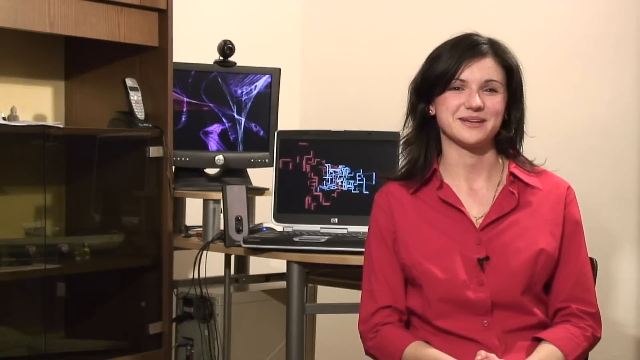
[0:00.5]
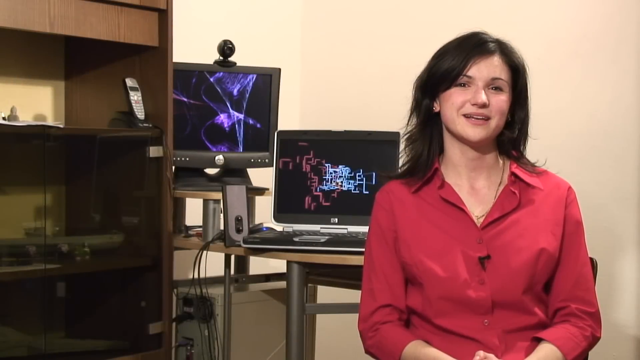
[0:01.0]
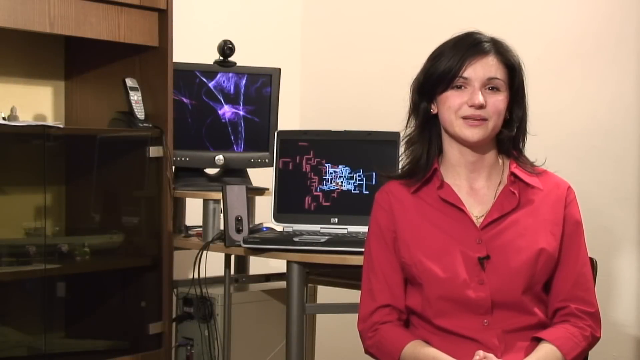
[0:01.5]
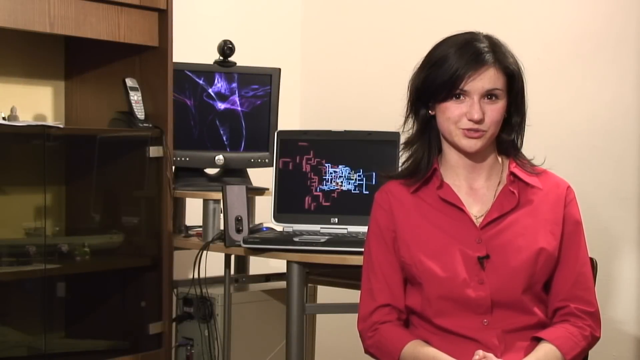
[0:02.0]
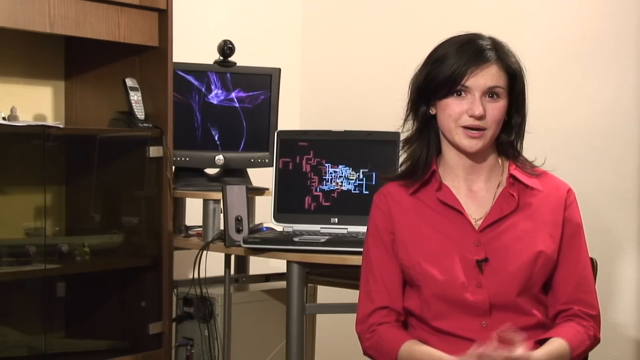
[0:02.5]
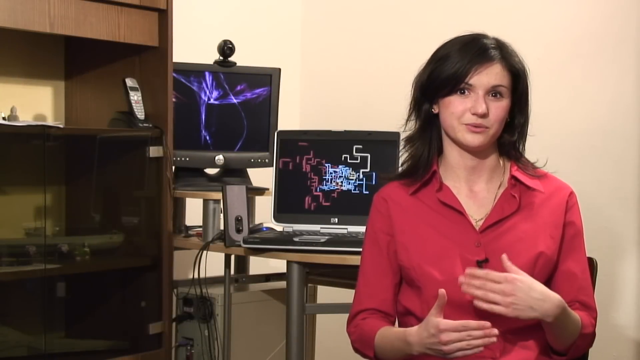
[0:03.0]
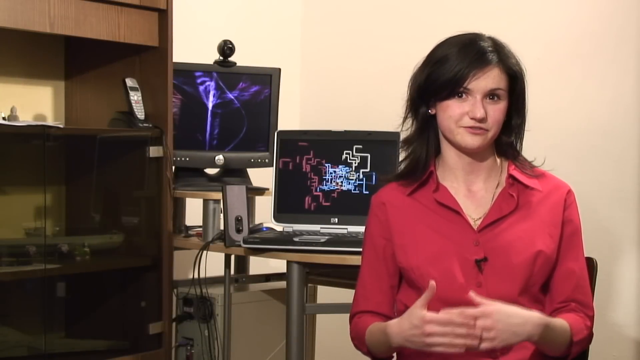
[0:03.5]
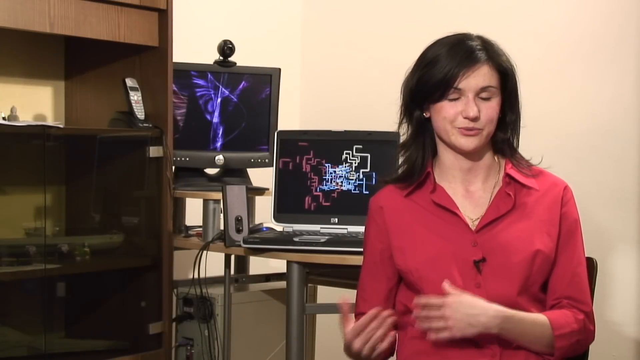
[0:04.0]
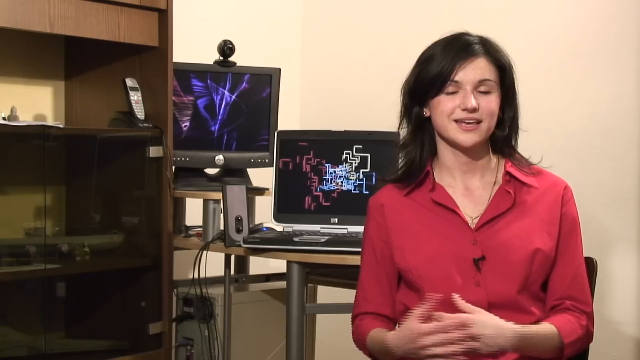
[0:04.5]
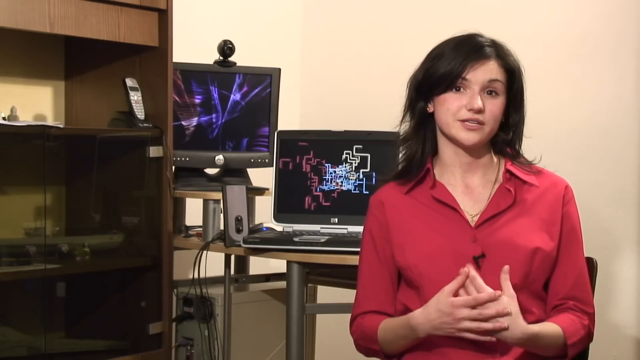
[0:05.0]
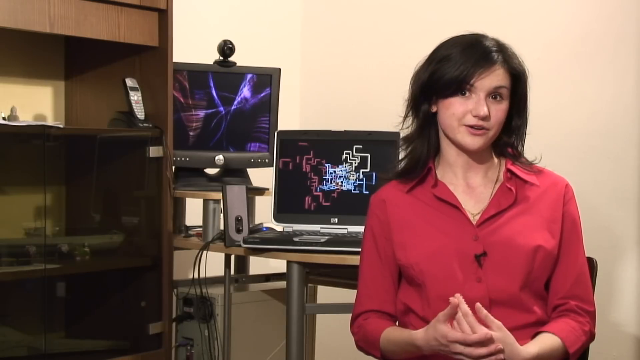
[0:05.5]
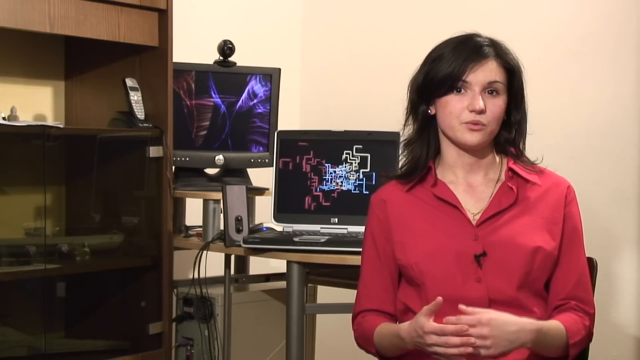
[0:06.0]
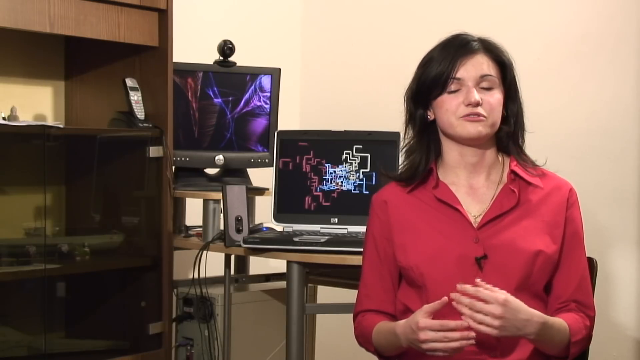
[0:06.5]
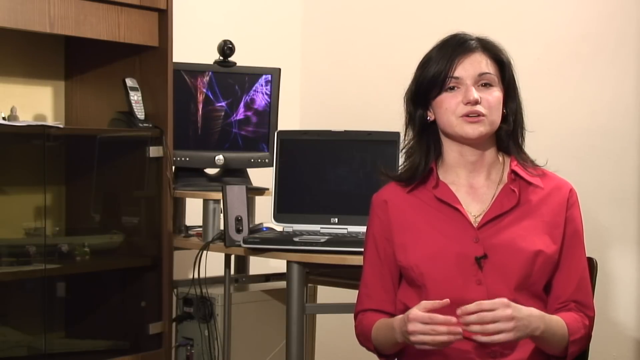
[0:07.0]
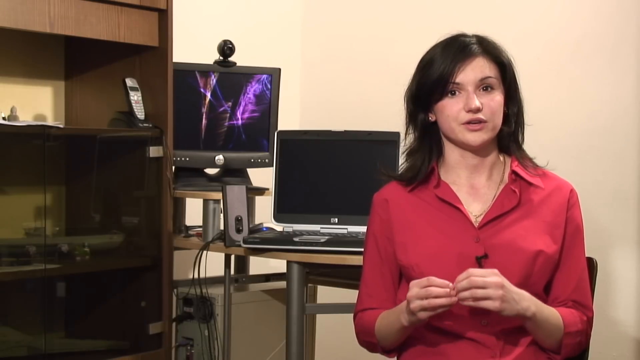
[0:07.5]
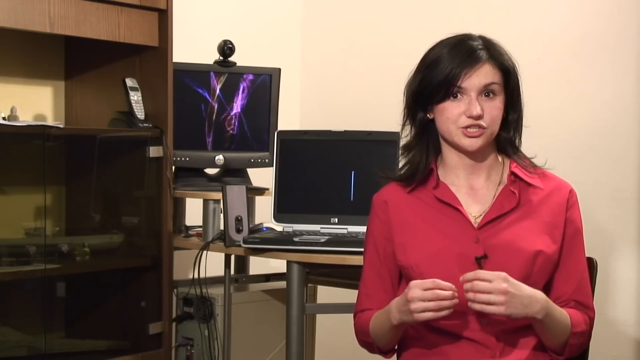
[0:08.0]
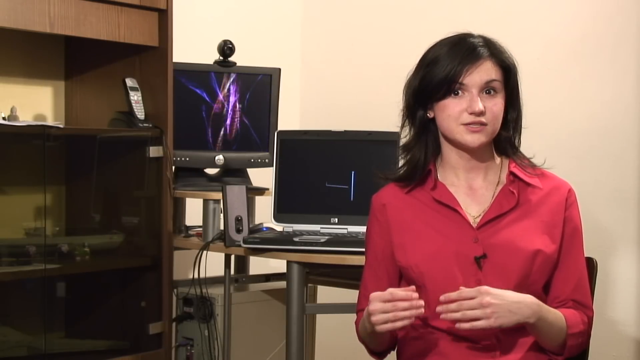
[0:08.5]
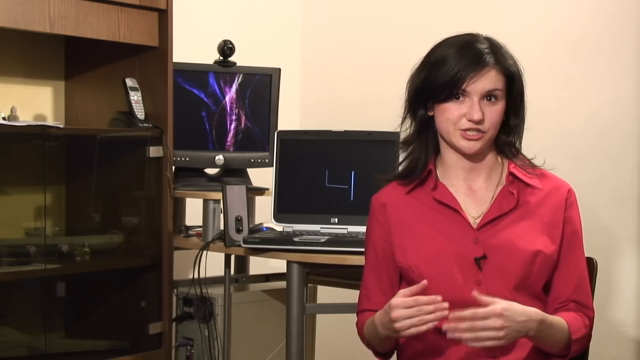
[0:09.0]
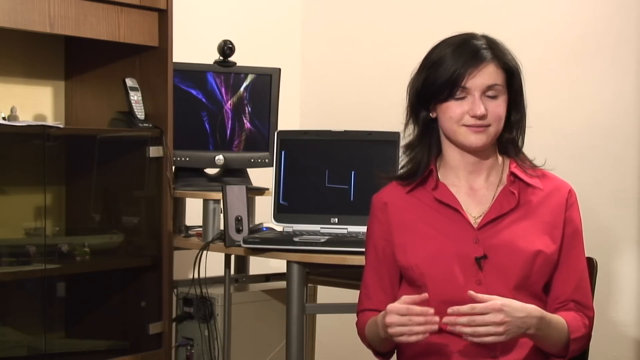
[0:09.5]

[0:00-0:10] A woman in a red blouse talks as if she is teaching, like an instructor of some sort, in a small office-type setting. In the background are two older-style computer monitors, and a wooden shelf is also behind her. There also appears to be an older phone. One of the computer monitors has a webcam placed on top of it, in the background behind the first monitor, and there is also an older-style speaker. Judging from the older technology visible, the video looks like it may be 15 or 20 years old.